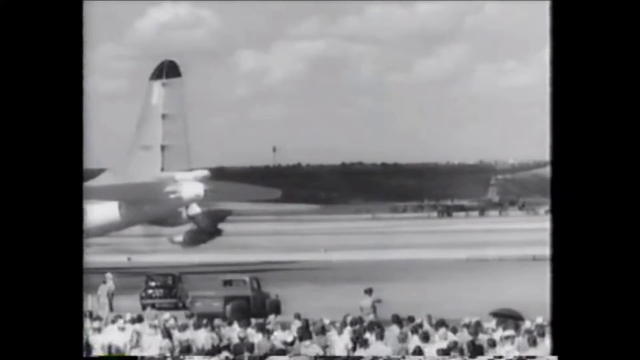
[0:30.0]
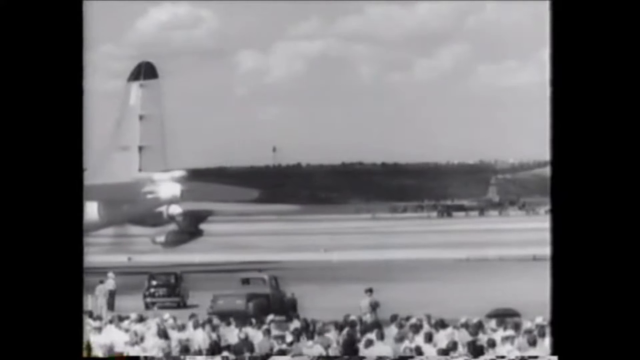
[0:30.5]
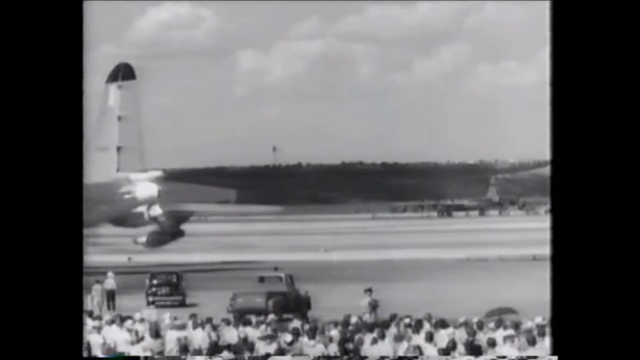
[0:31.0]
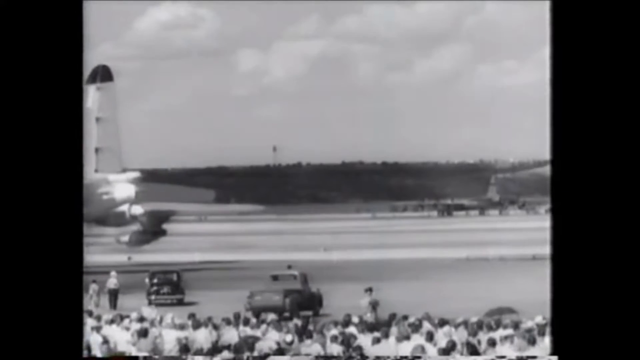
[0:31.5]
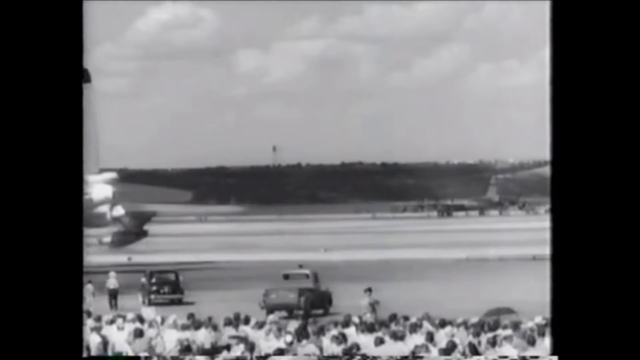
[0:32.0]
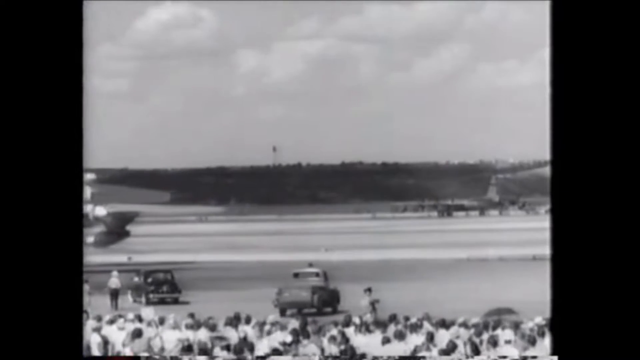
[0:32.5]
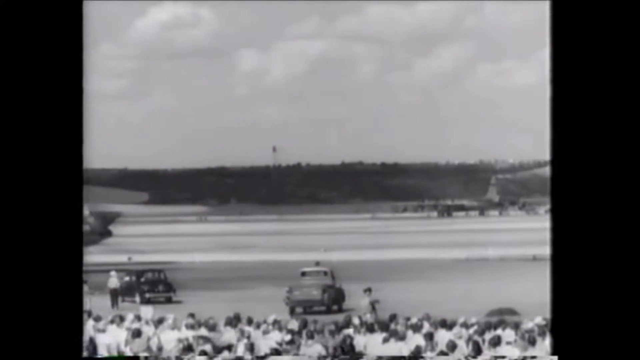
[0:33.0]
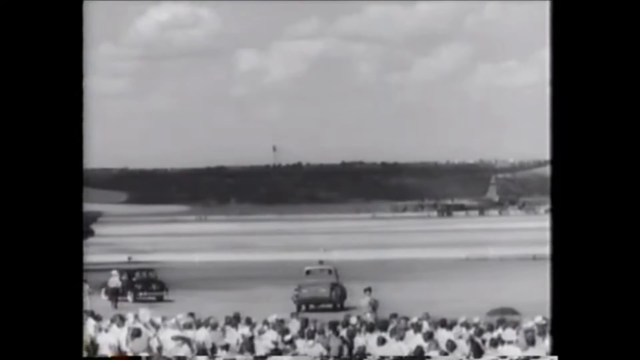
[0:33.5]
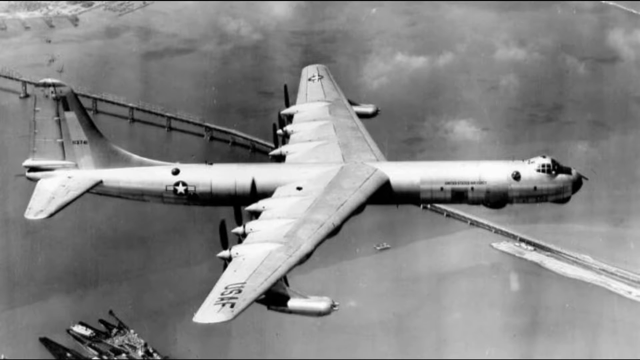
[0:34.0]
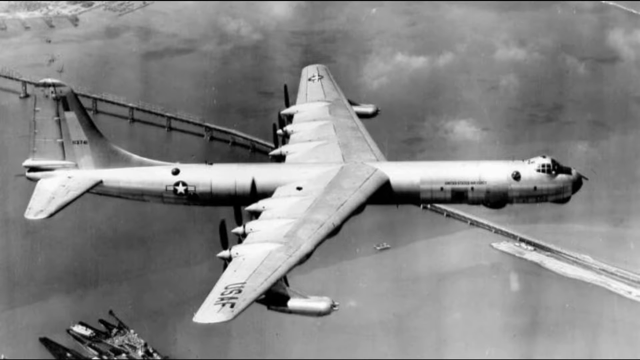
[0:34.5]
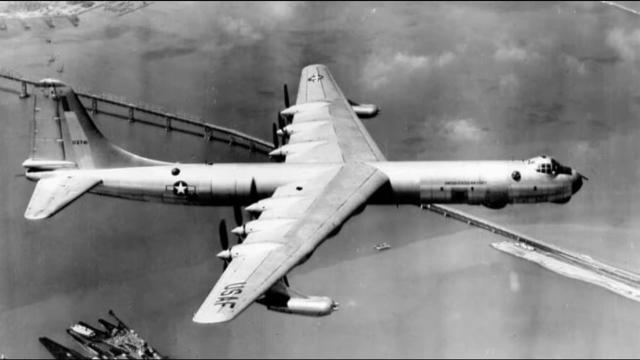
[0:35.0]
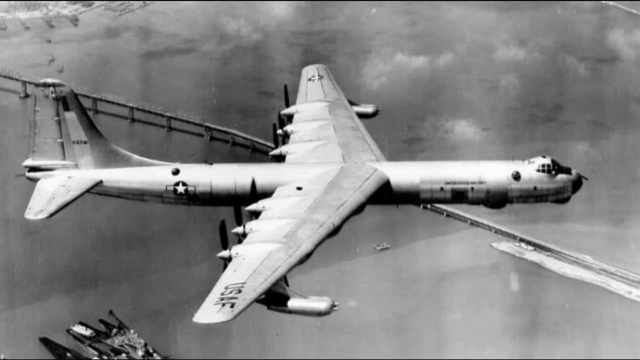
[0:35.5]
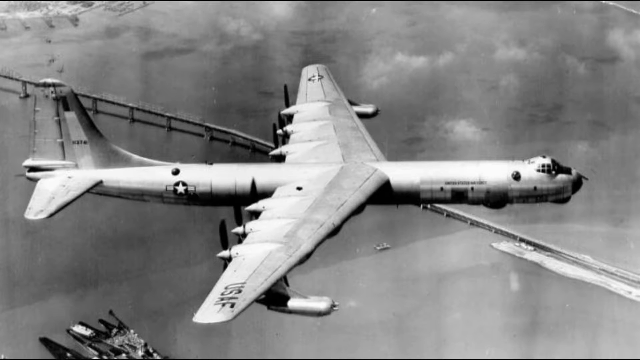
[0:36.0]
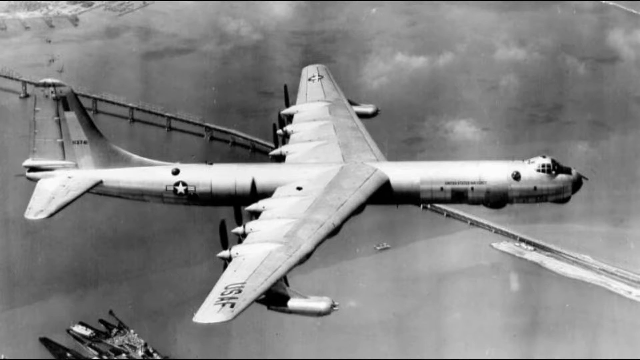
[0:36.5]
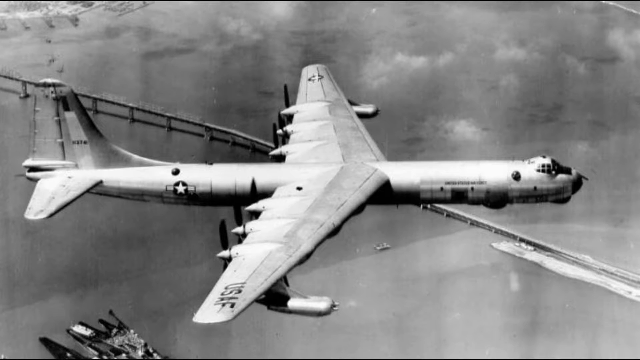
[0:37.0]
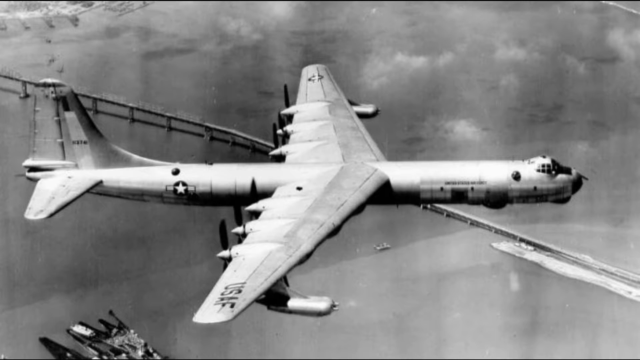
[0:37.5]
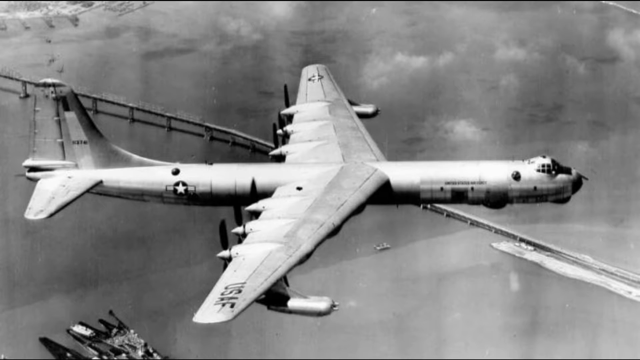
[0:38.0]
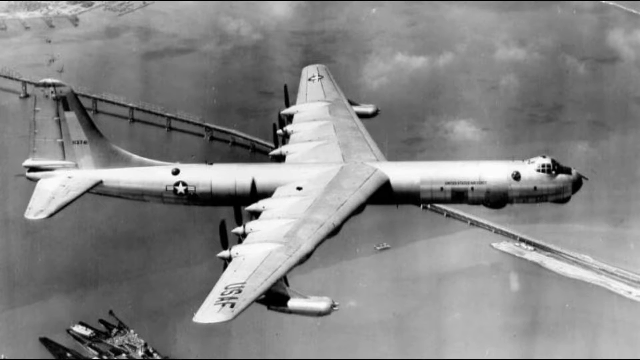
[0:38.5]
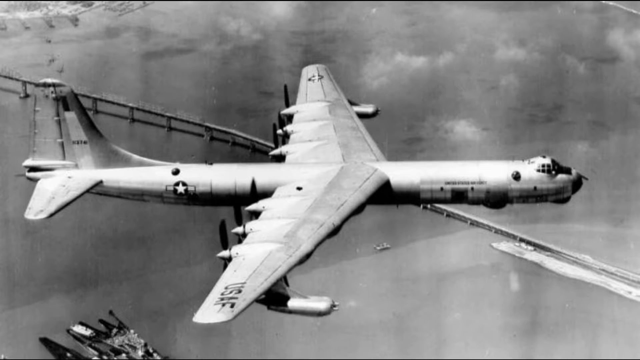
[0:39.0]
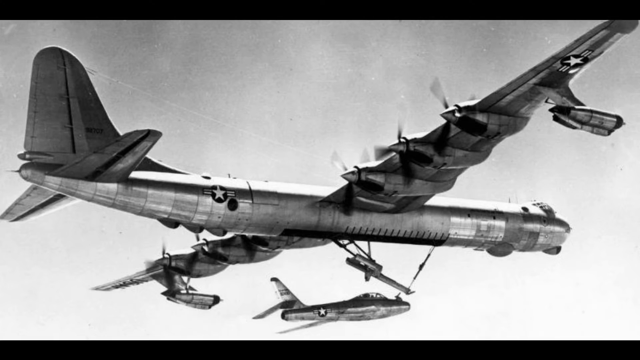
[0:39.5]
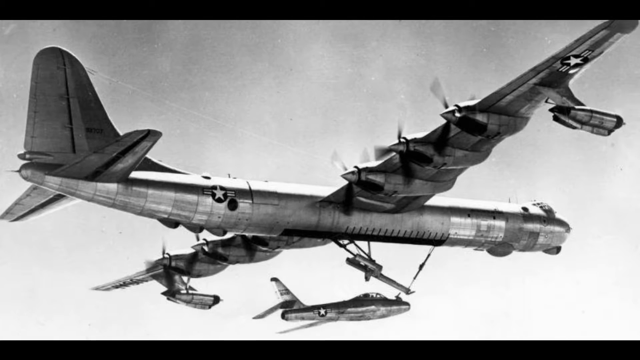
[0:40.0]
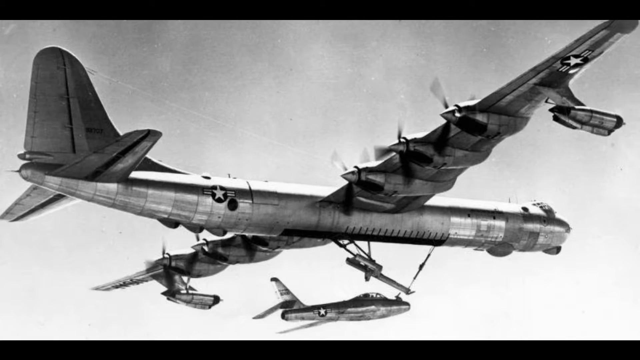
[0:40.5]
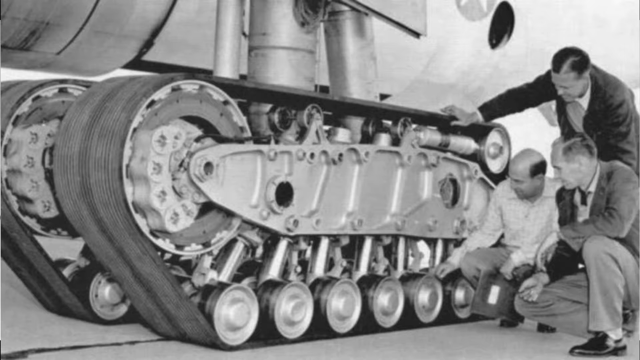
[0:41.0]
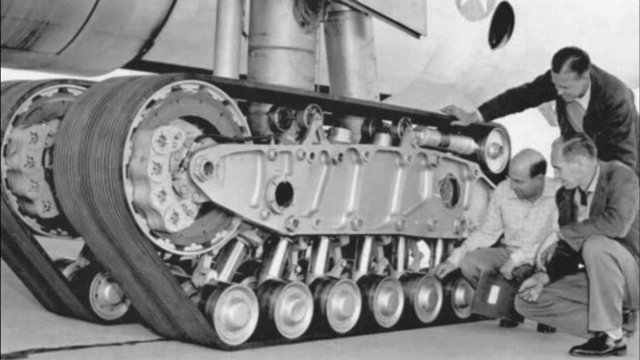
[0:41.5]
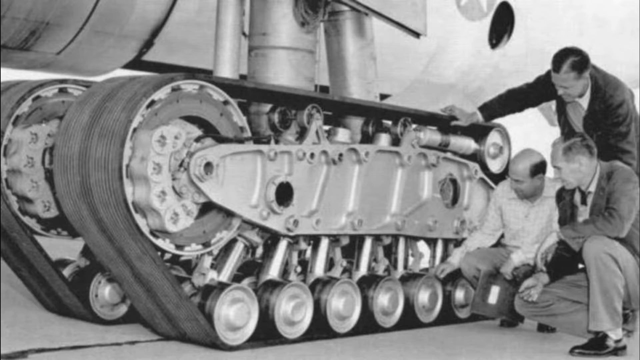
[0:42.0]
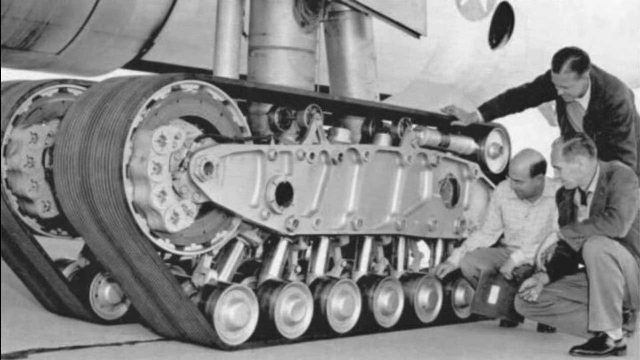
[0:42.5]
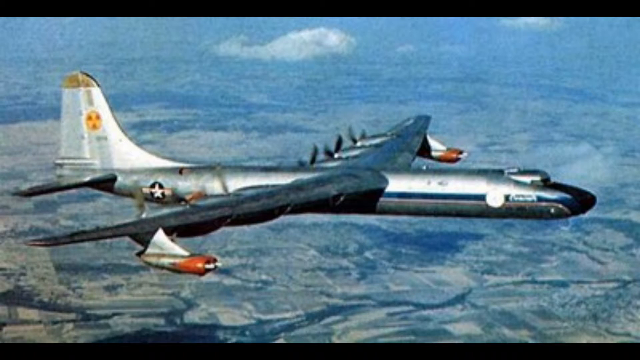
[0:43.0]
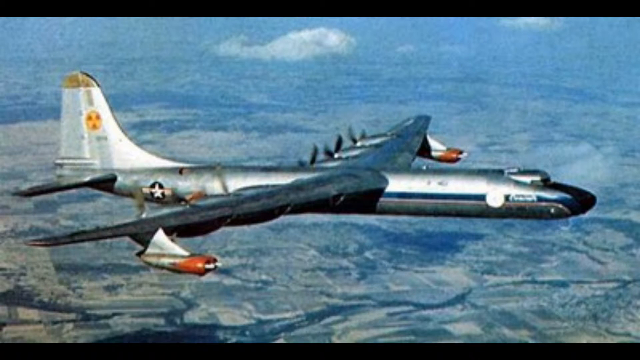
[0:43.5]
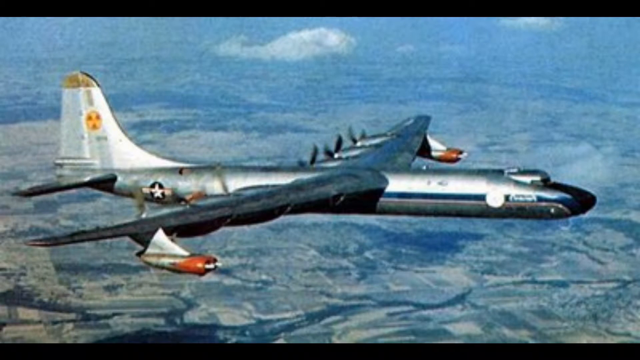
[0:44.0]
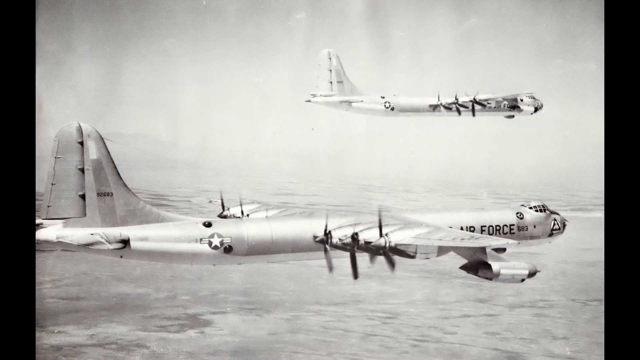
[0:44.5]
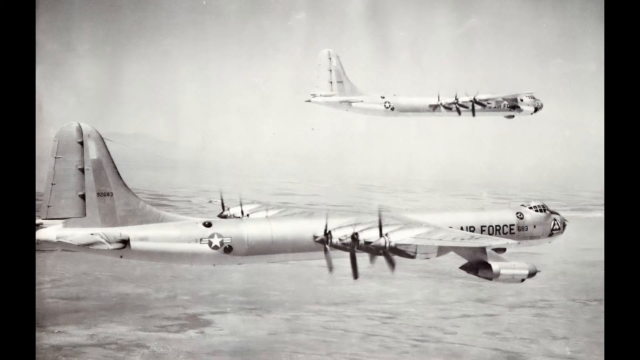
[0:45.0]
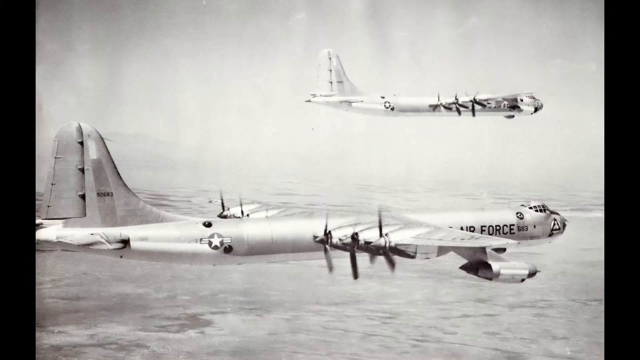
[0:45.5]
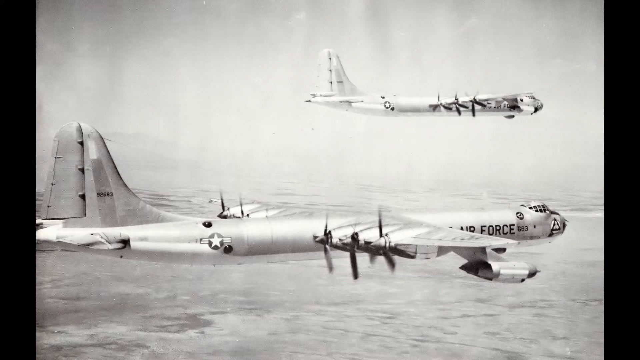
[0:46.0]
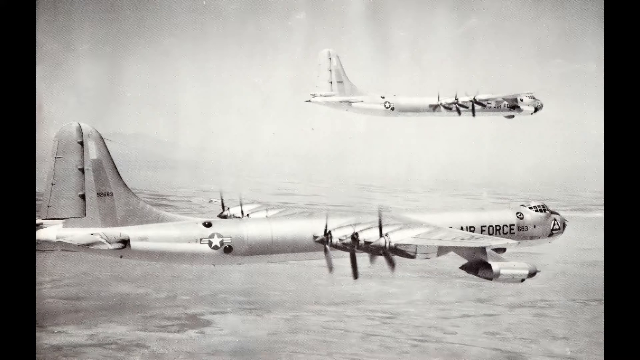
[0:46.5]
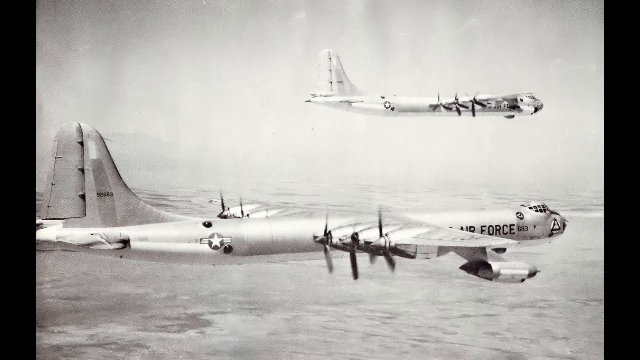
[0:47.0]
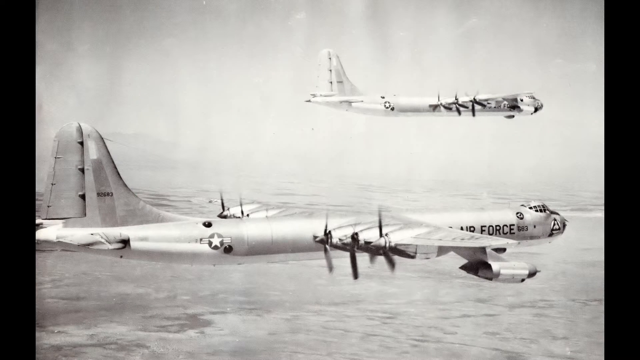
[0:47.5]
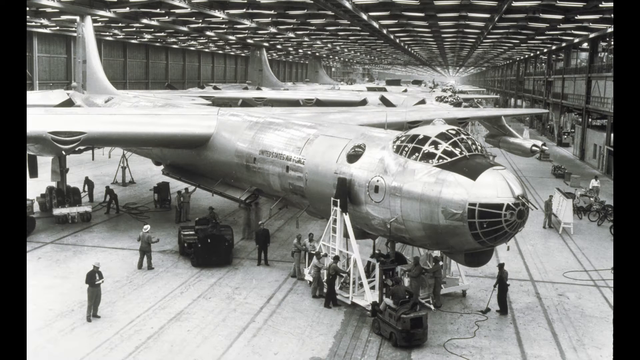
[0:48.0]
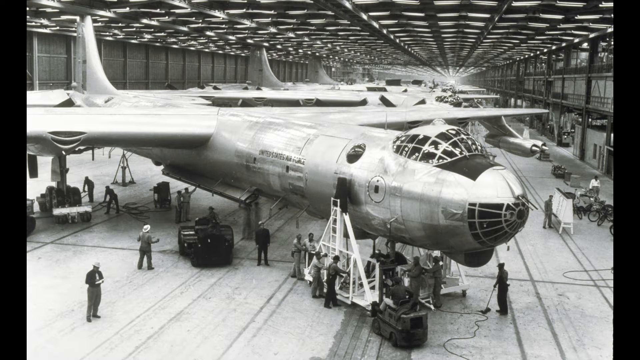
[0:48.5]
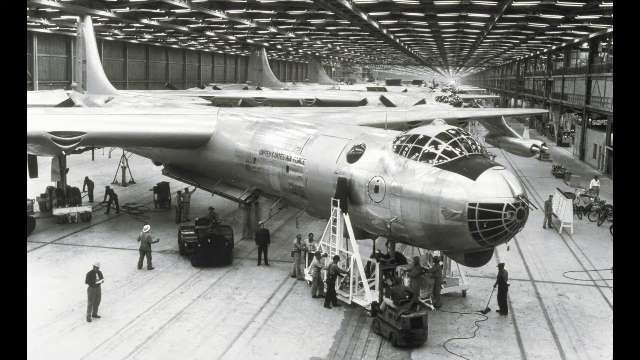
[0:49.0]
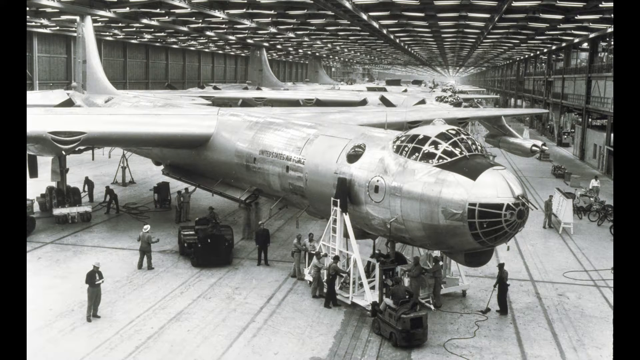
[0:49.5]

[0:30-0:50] Black-and-white footage shows the B36 aircraft on a runway, with a flatbed truck and a car driving behind it. Next comes a black-and-white still image of the aircraft in flight, with "USAF" visible on it. Many stills follow showing the aircraft in action and being attended to by technicians, in a hangar and at a couple of other locations where it is getting maintenance. In one aerial view it flies over a body of water with a bridge in the background; where the photo was taken is unclear. There is also one color image of the aircraft.